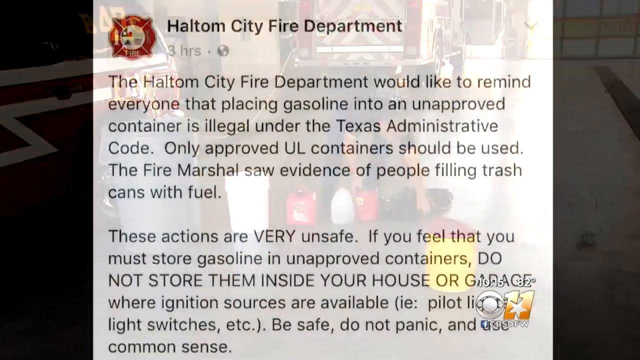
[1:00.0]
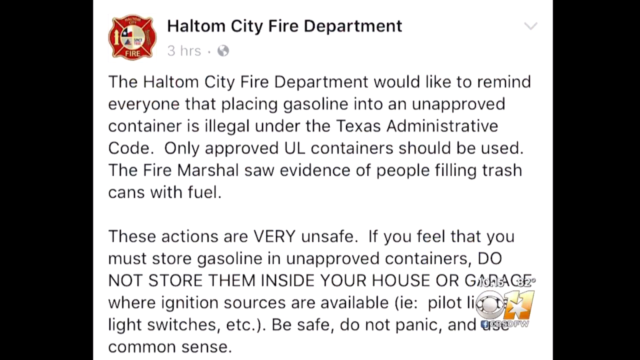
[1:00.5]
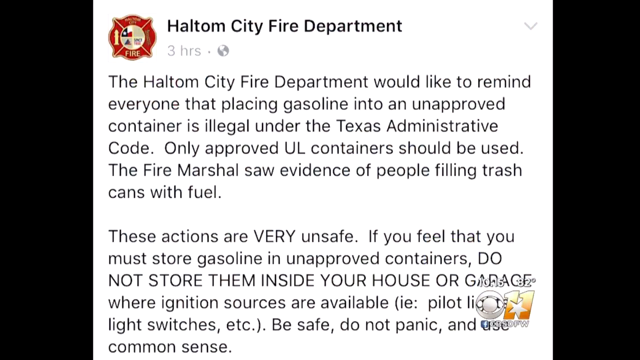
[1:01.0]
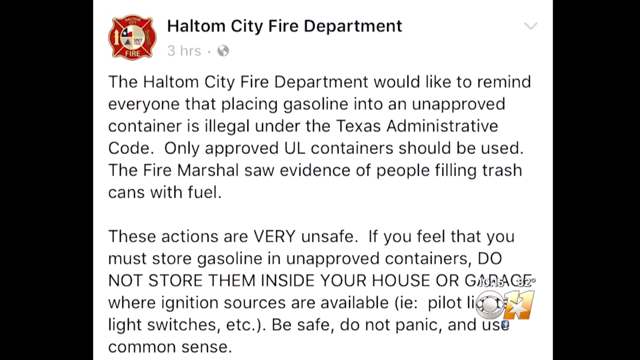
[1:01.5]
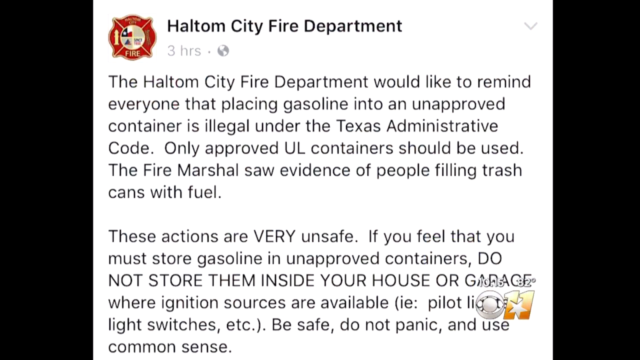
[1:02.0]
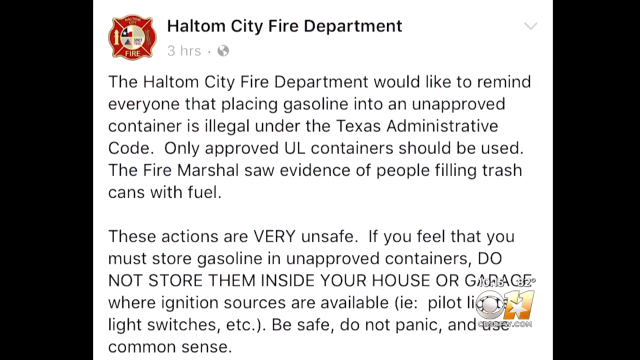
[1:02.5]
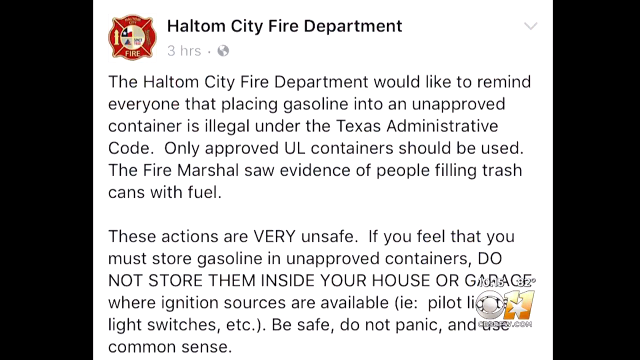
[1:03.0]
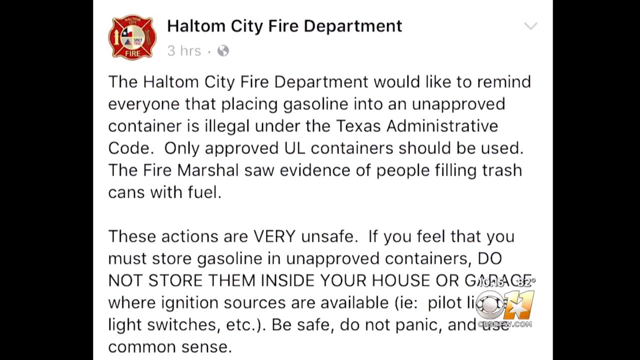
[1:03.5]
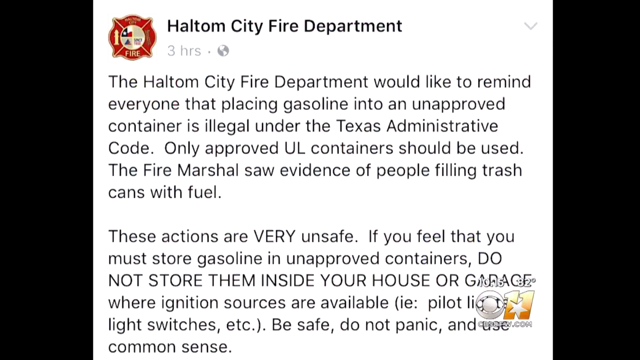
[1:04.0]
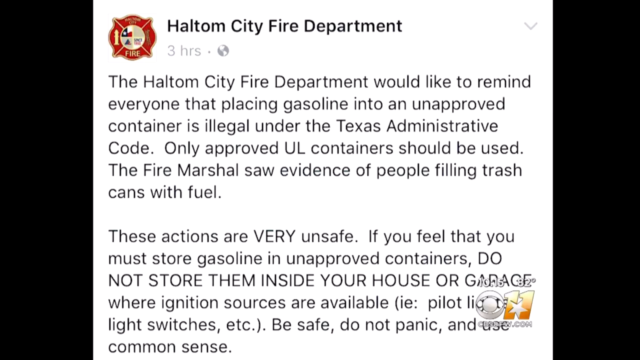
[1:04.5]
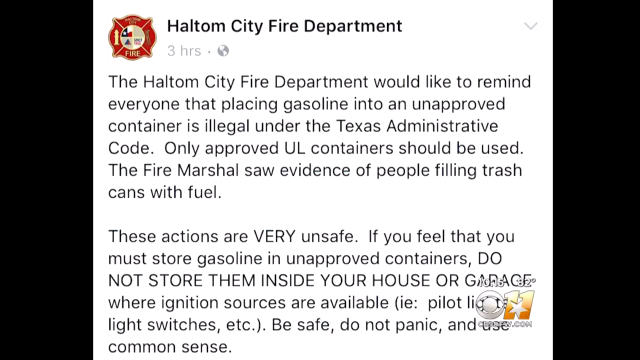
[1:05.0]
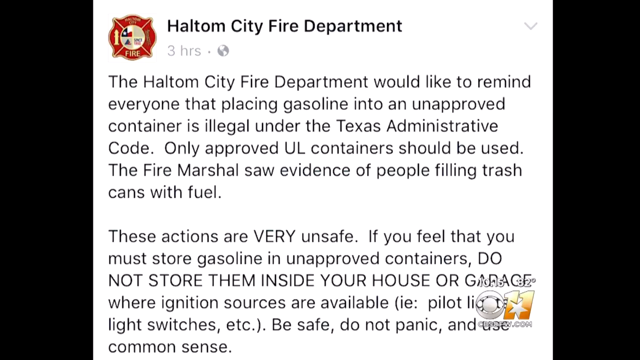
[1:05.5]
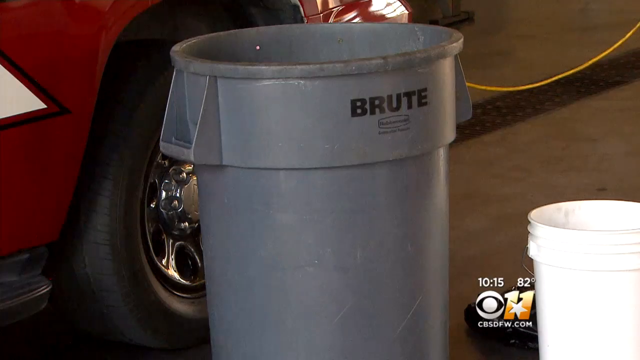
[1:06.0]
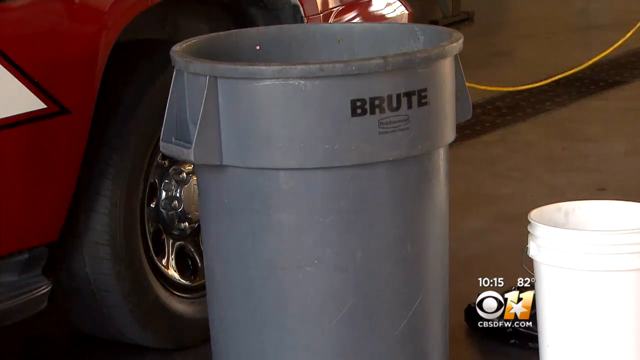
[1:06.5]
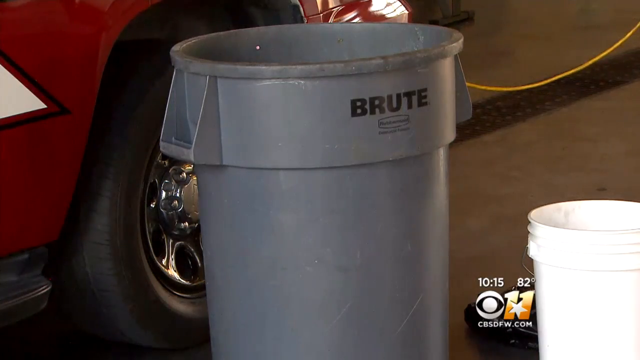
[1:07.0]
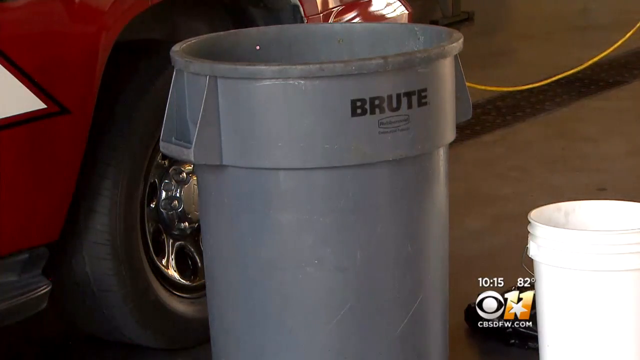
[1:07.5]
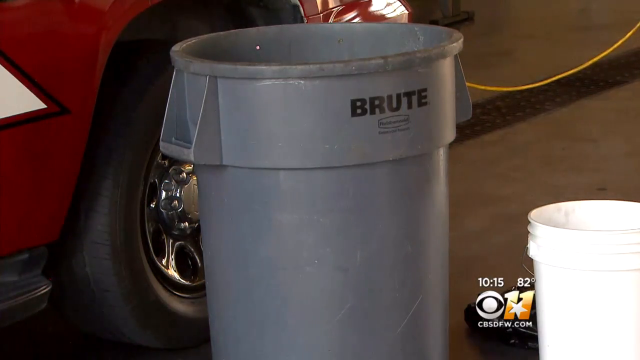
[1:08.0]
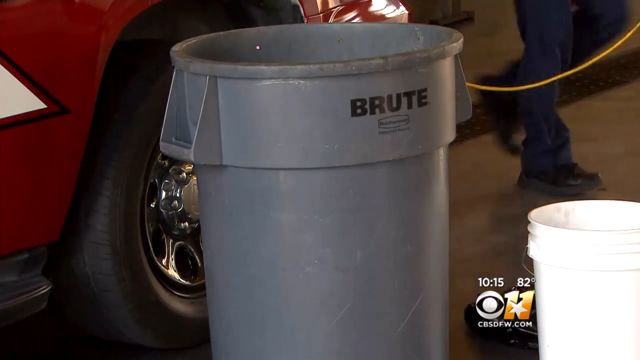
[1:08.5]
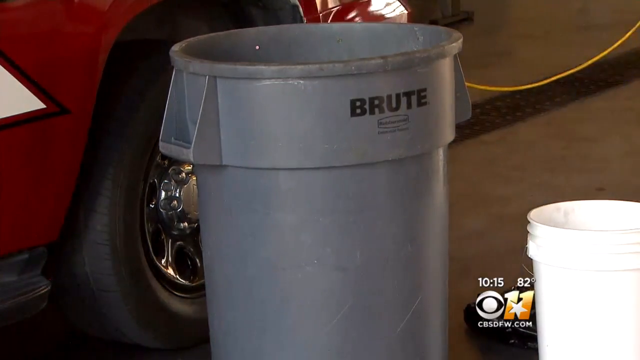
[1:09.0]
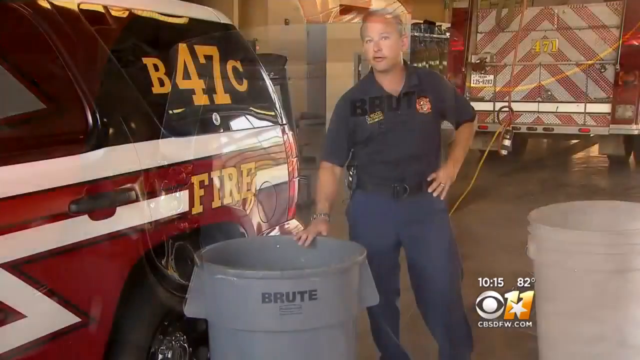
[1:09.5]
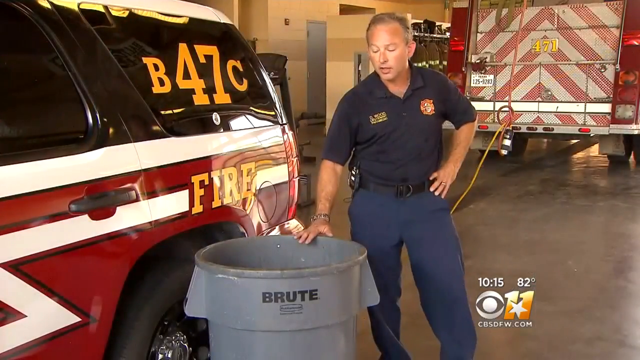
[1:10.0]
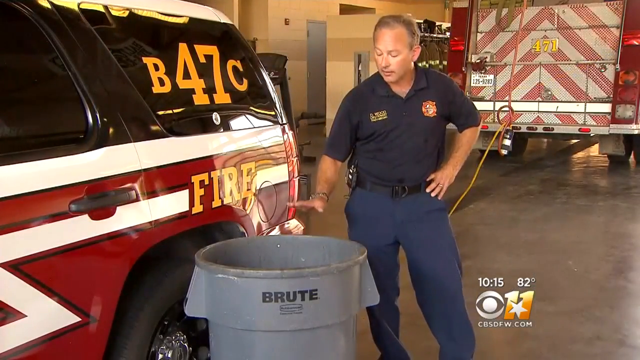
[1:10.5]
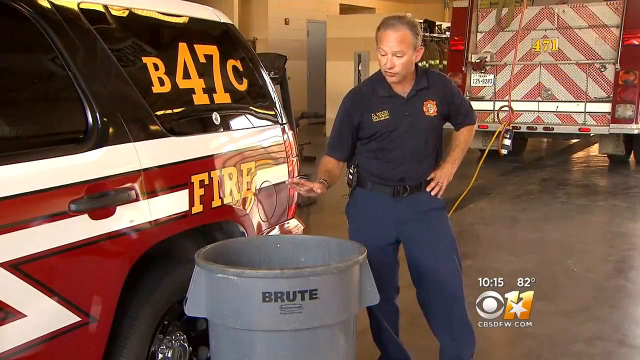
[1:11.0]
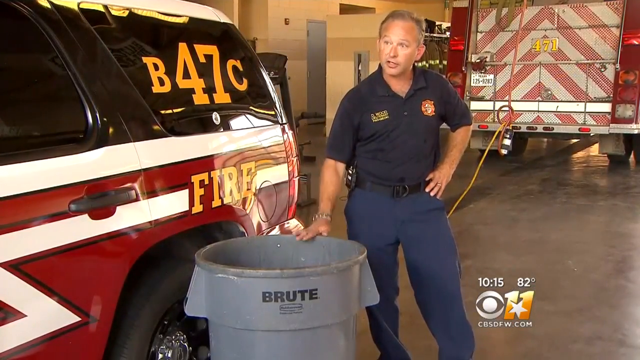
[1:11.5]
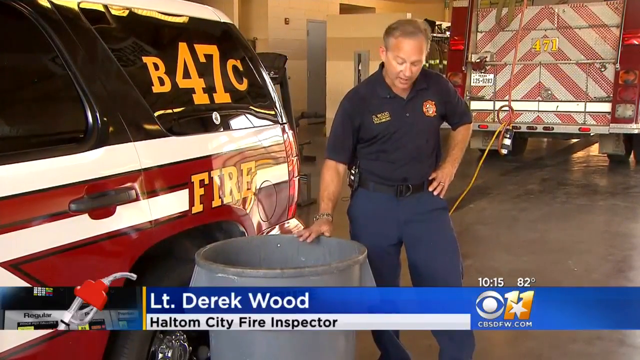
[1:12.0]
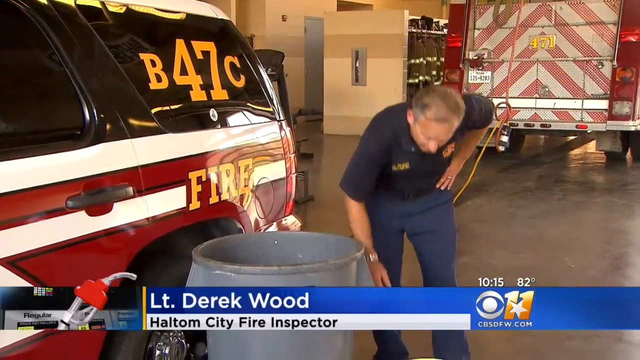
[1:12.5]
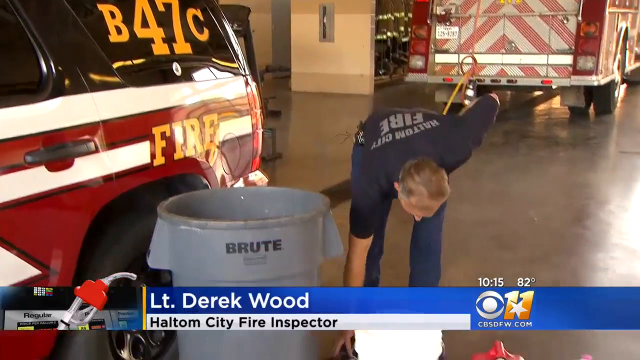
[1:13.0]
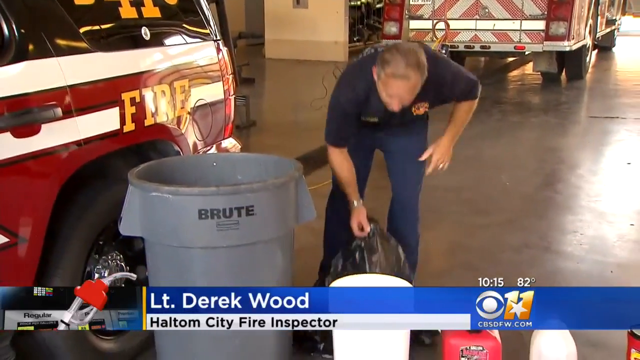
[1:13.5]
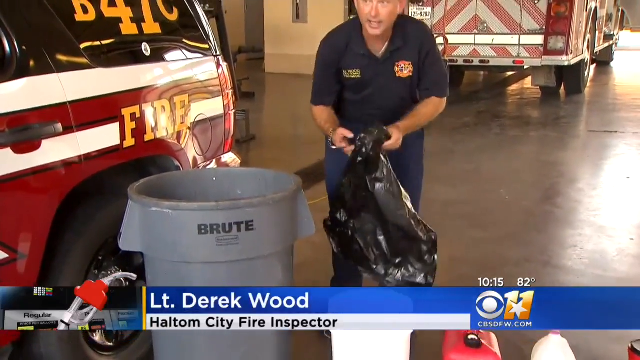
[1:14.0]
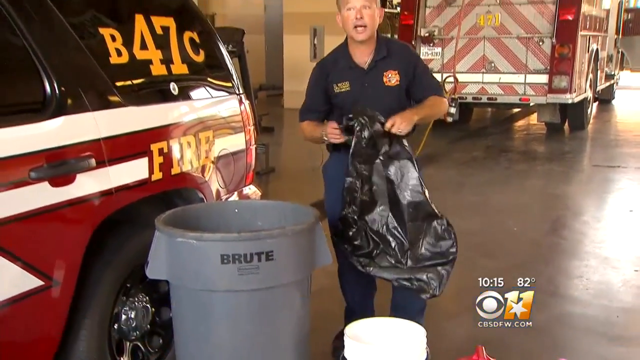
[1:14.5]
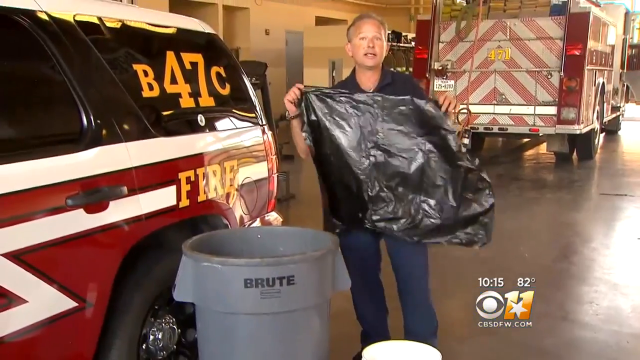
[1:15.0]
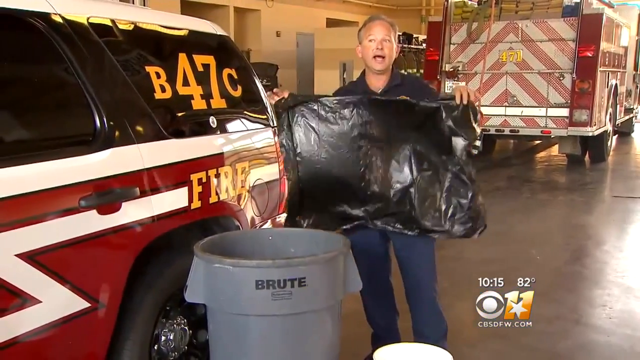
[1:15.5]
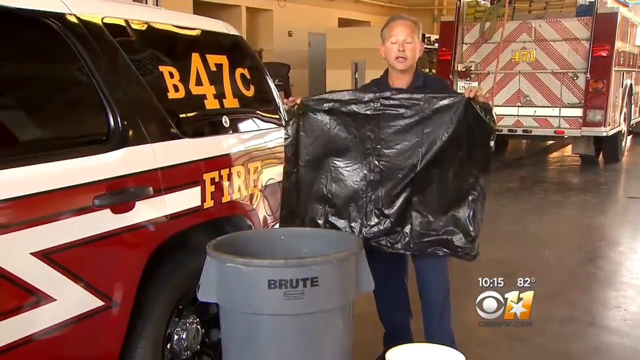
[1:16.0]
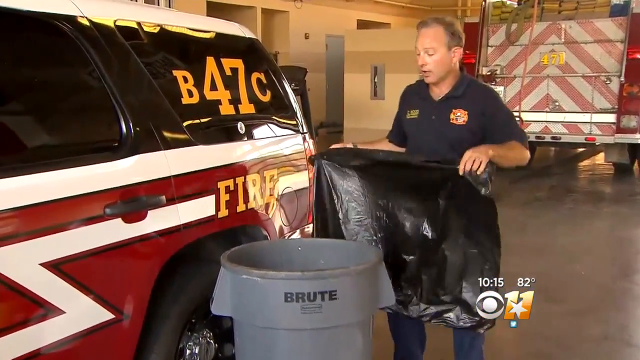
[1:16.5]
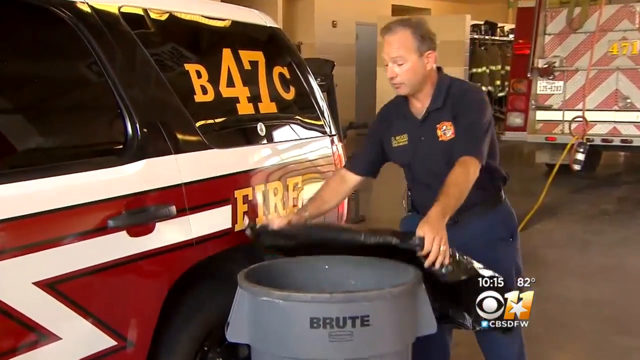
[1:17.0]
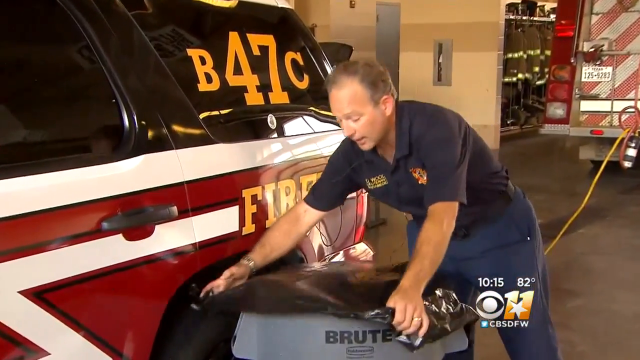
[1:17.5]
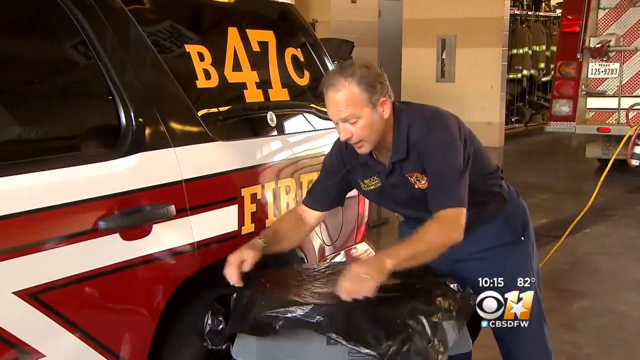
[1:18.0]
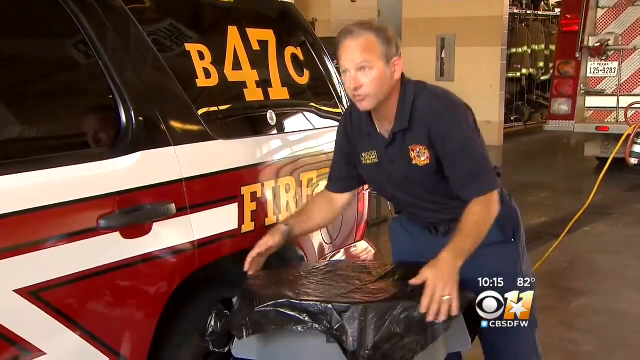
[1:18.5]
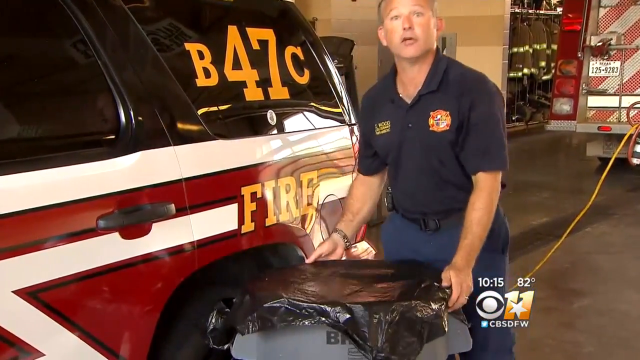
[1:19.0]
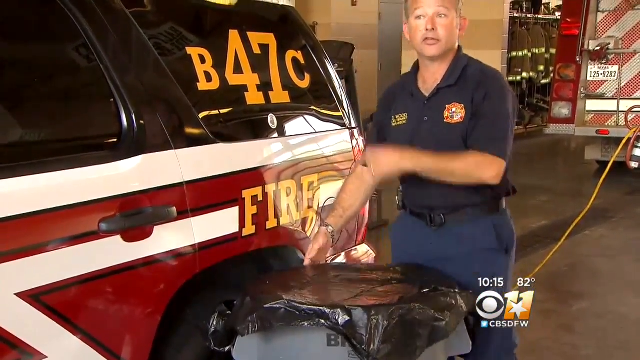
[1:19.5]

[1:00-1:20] A statement from the Haltom City Fire Department appears on screen, reading: "the Haltom City Fire Department would like to remind everyone that placing gasoline into an unapproved container is illegal under the Texas Administration Code. Only approved UL containers should be used." It continues: "If you feel that you must store gasoline in unapproved containers, do not store them inside of your house or garage." A CBS 11 logo is in the bottom right-hand corner of the screen. Next is an image of a gray Rubbermaid trash can on the ground in front of a firetruck. A middle-aged white man in a fire department polo and pants then appears; the on-screen caption gives his name as "Lieutenant Derrick Wood" and, below that, "Haltom City Fire Inspector." While speaking into the camera, he picks up a black plastic bag and puts it over the plastic trash can.